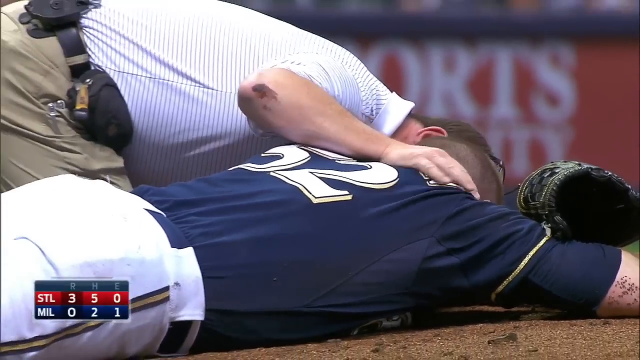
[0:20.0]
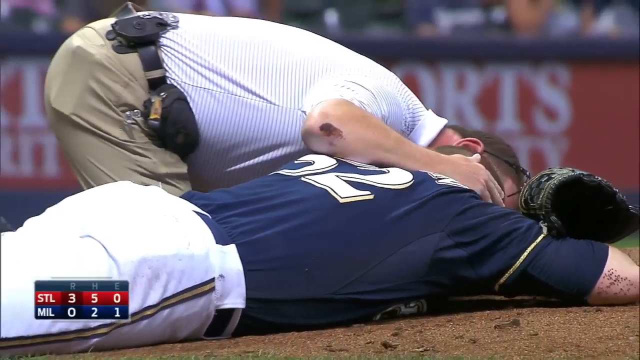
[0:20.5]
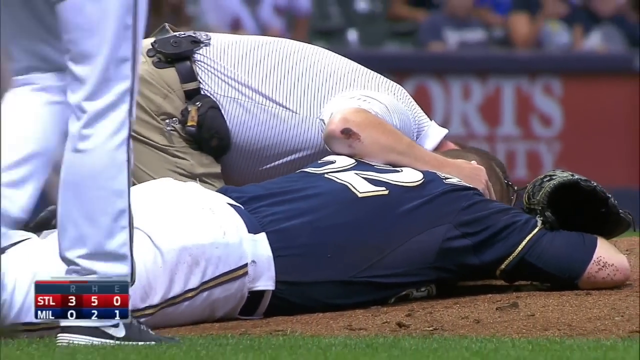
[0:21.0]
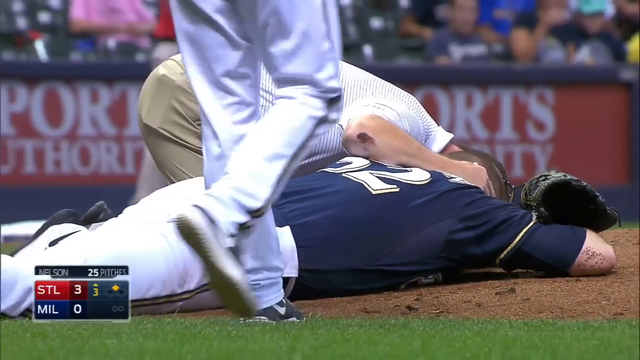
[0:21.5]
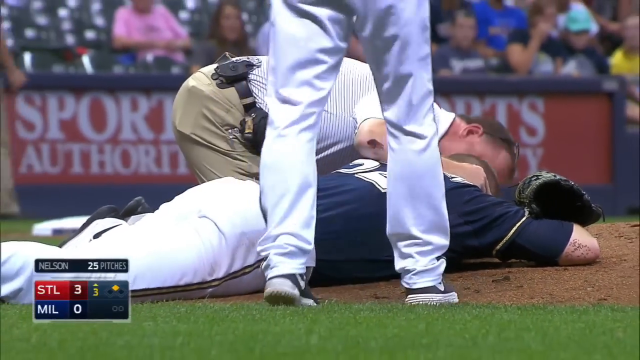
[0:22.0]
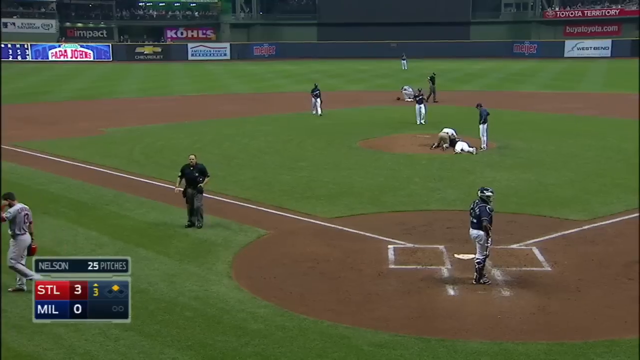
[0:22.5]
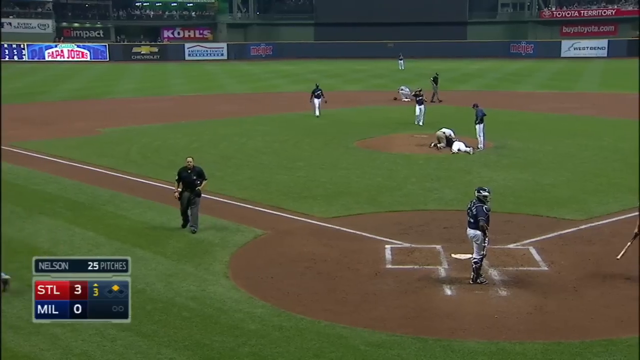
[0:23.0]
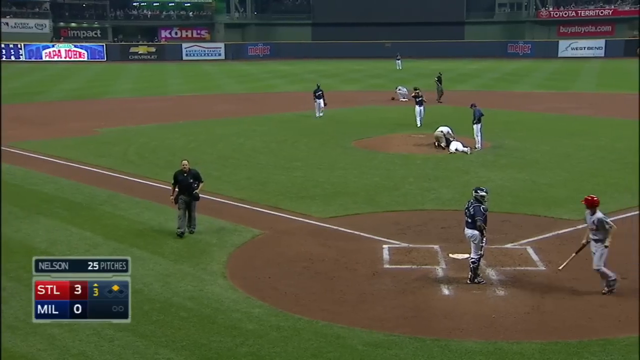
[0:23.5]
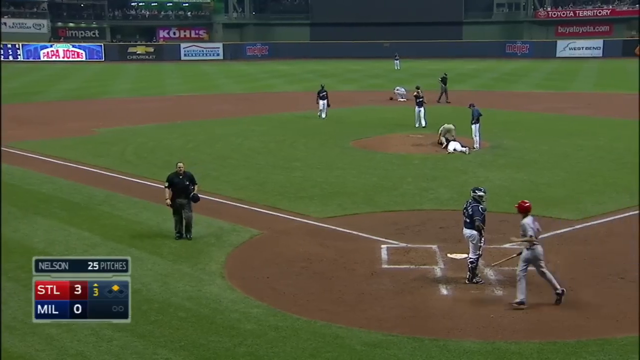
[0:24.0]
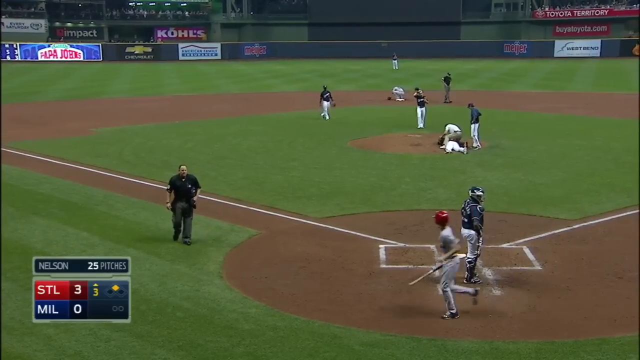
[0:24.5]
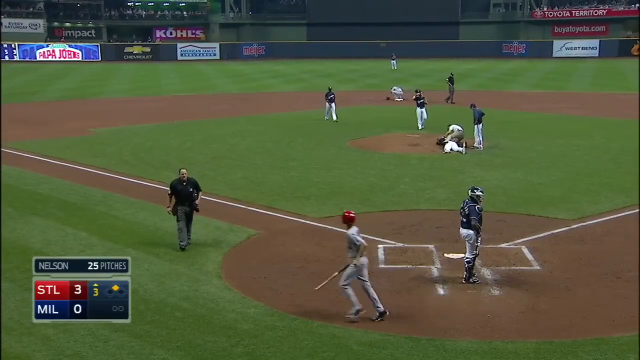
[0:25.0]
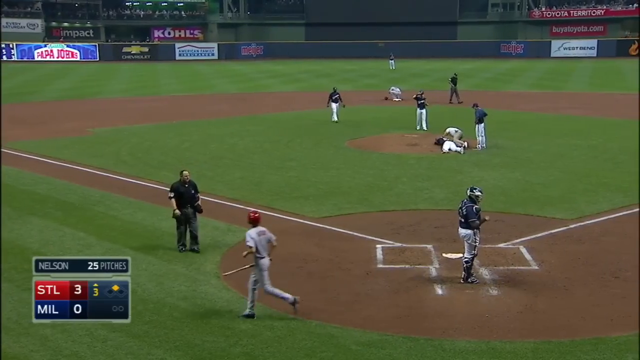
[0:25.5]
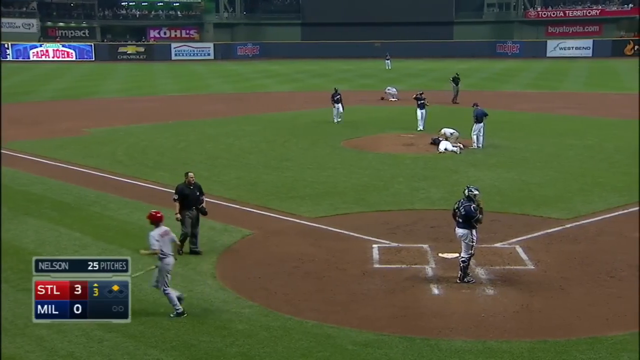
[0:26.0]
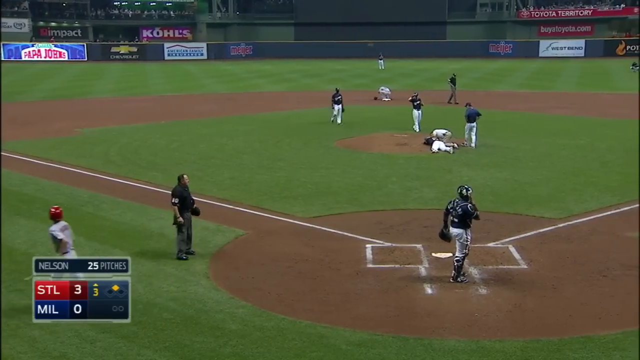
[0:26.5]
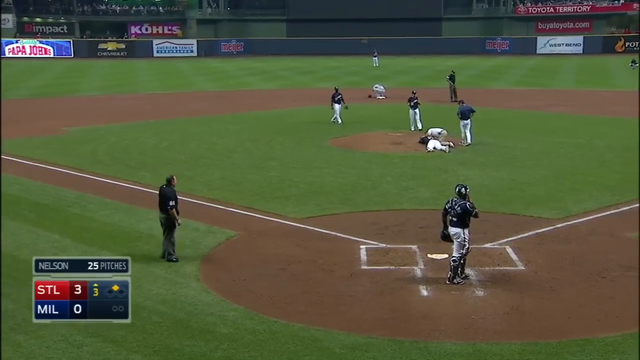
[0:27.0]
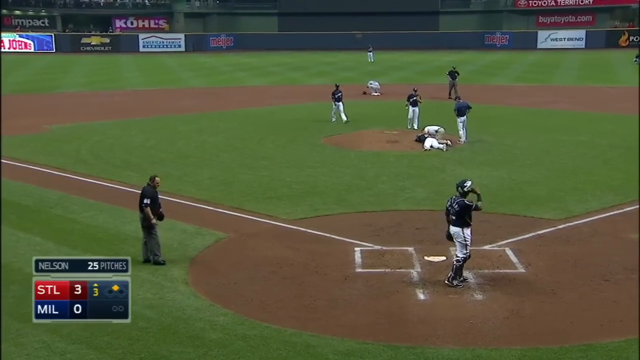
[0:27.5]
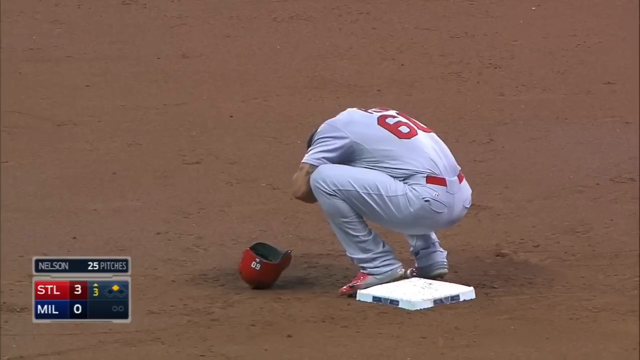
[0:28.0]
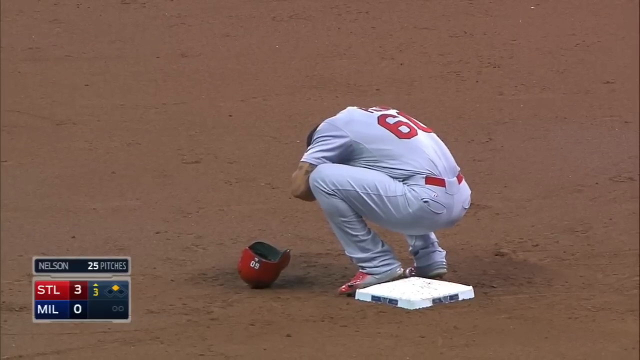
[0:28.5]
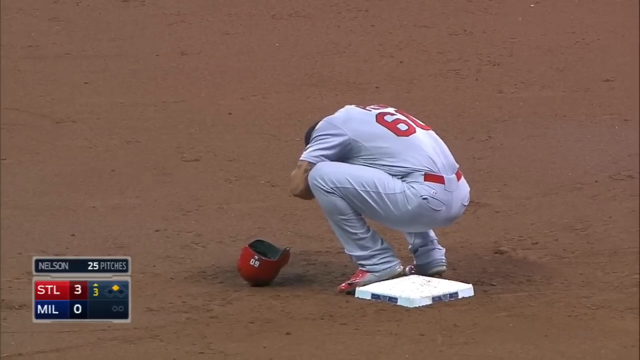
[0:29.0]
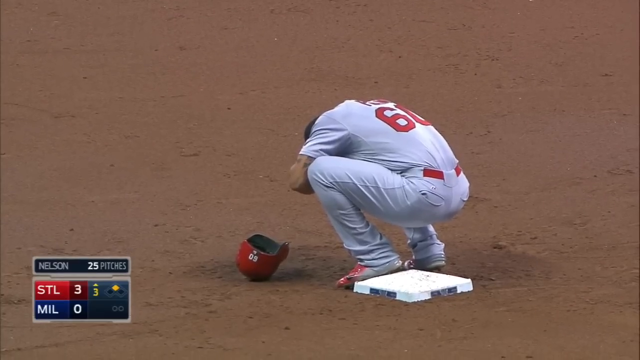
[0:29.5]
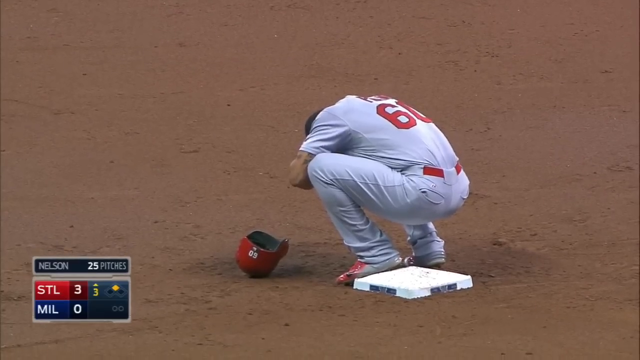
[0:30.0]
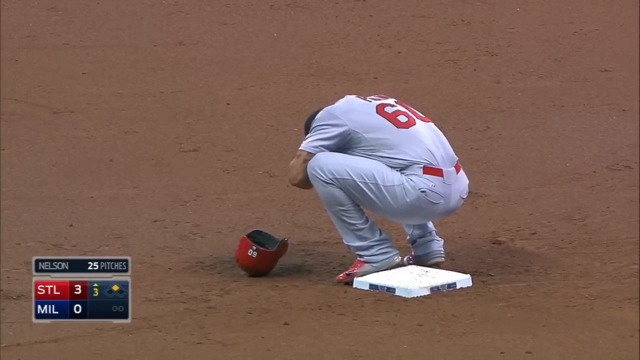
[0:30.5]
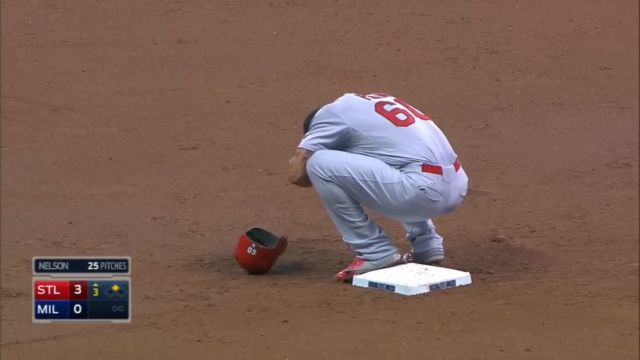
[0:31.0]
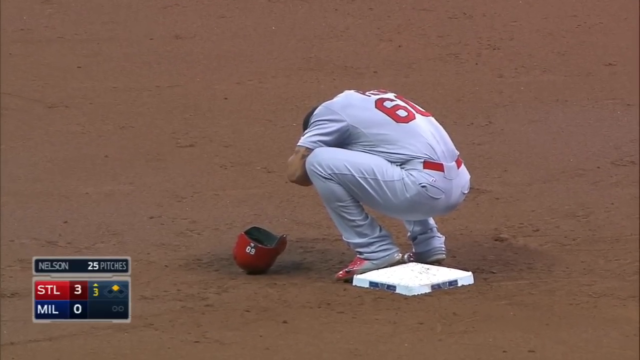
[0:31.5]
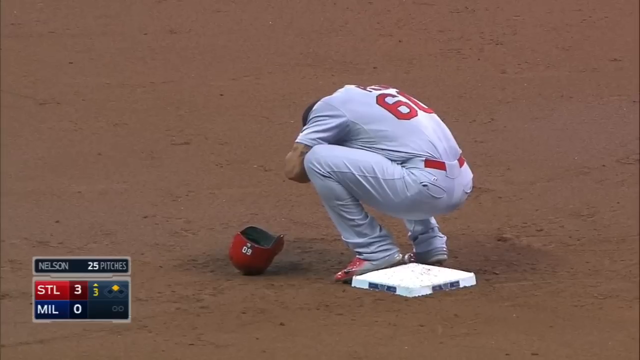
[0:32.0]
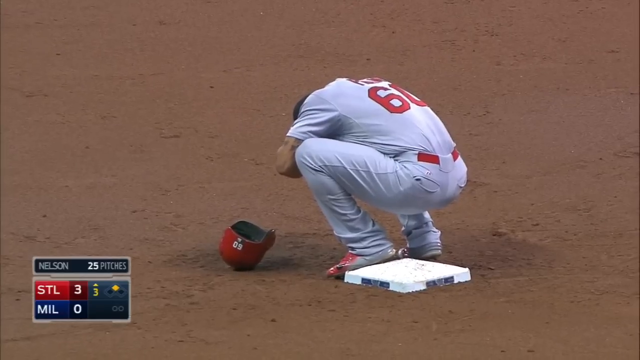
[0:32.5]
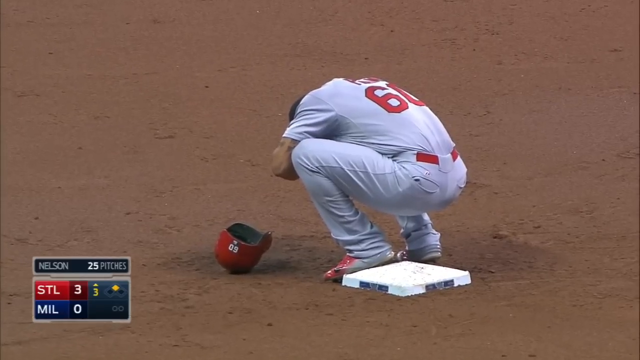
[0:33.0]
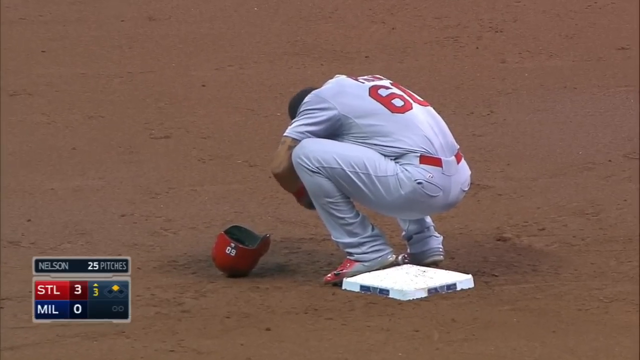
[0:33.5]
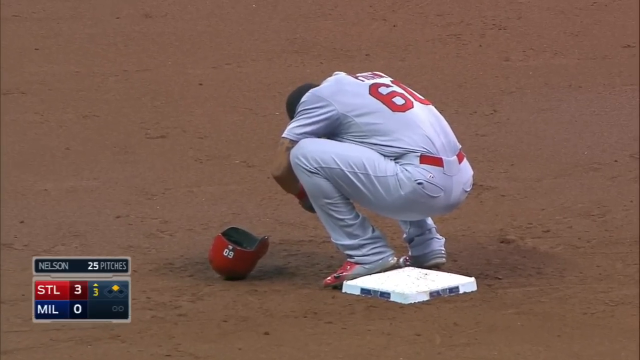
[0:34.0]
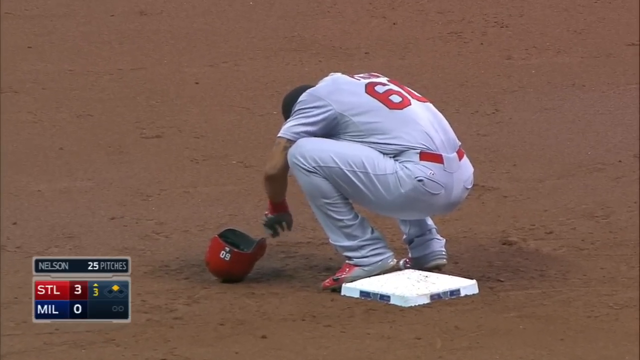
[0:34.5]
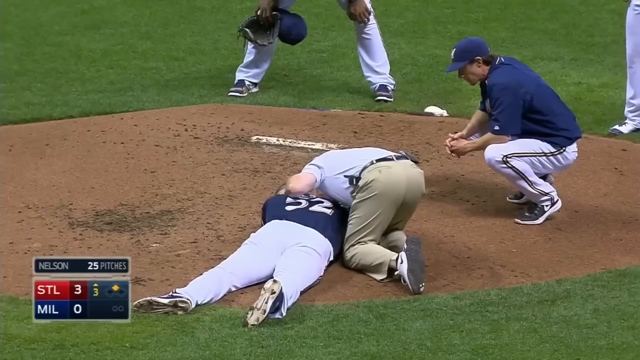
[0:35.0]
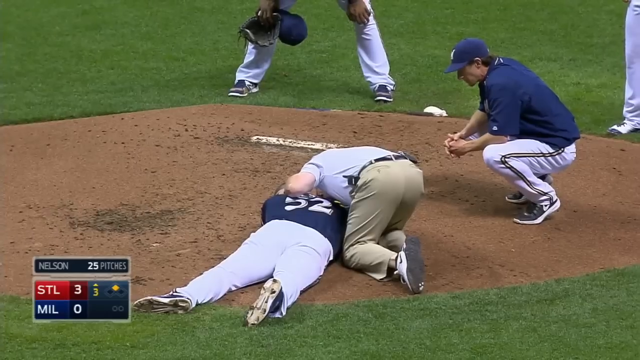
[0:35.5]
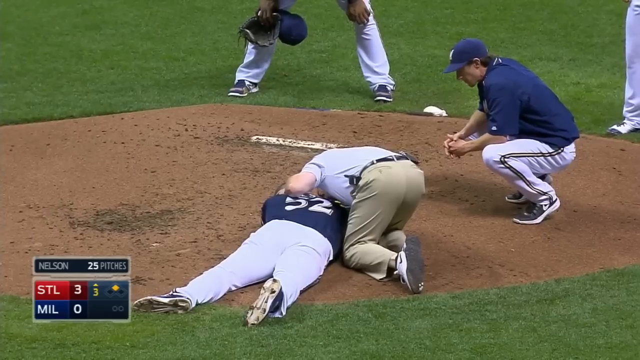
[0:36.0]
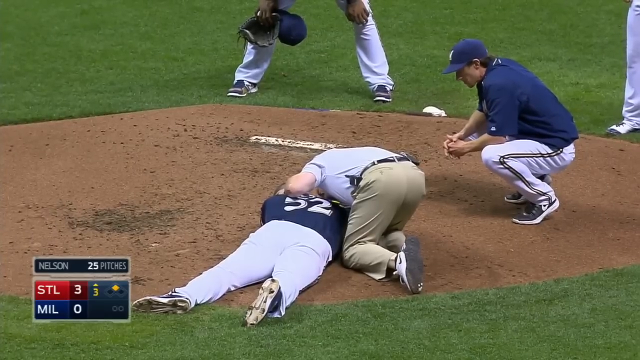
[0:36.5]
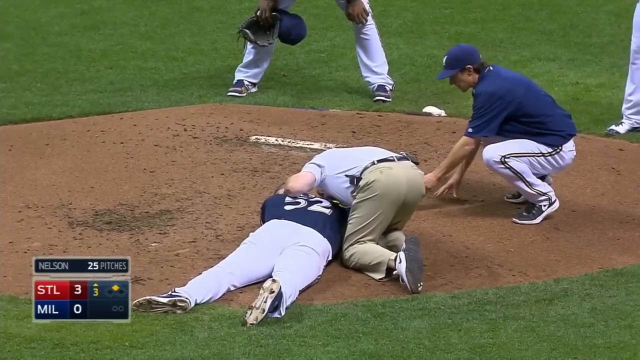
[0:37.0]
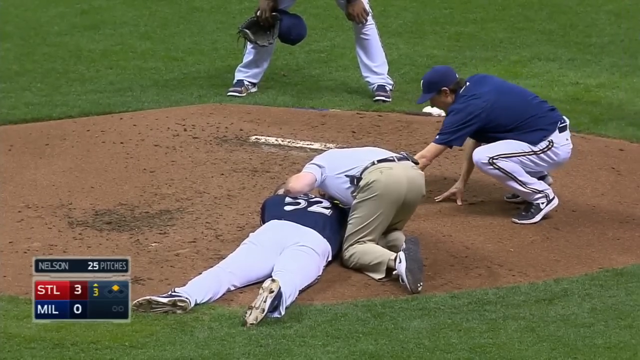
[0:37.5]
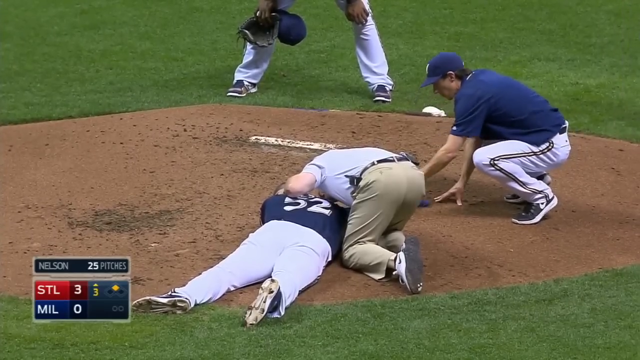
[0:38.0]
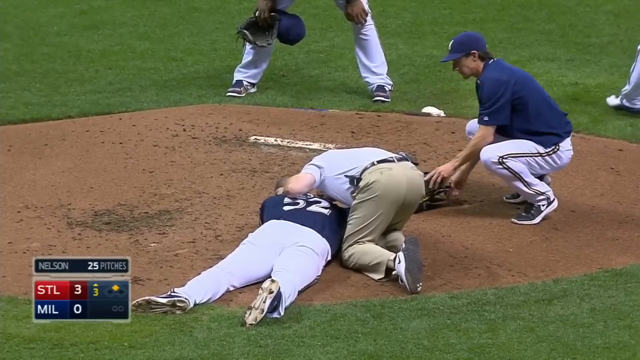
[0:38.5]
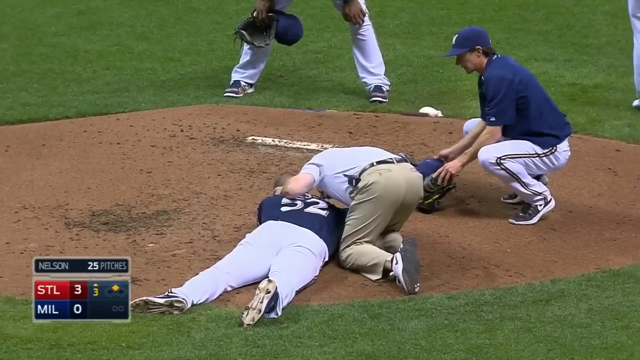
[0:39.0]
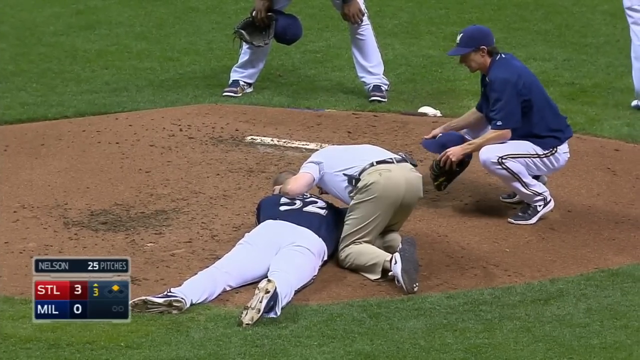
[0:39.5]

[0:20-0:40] The Milwaukee trainer kneels to the left of the pitcher Nelson, who lies on his stomach near the mound. The trainer places his right hand on Nelson's right shoulder, checking for signs of consciousness. Nelson has not moved. Many players and the umpires stand frozen. The runner on second base crouches down, probably praying, with his helmet on the ground in front of him. Players from both teams, St. Louis and Milwaukee, look shocked and dismayed. Several players crouch down next to the motionless pitcher.